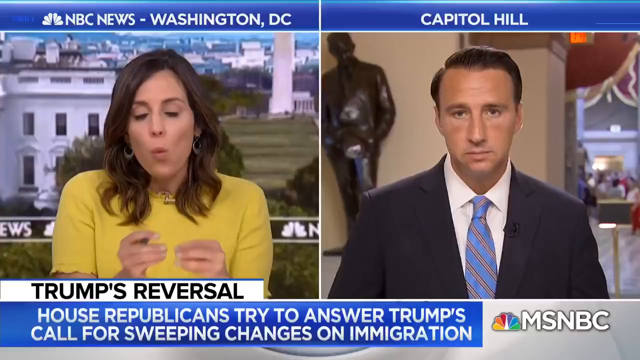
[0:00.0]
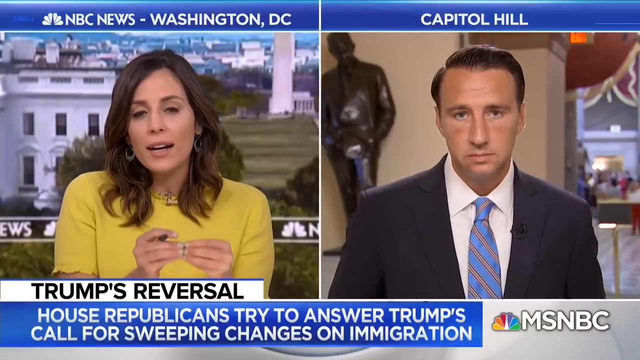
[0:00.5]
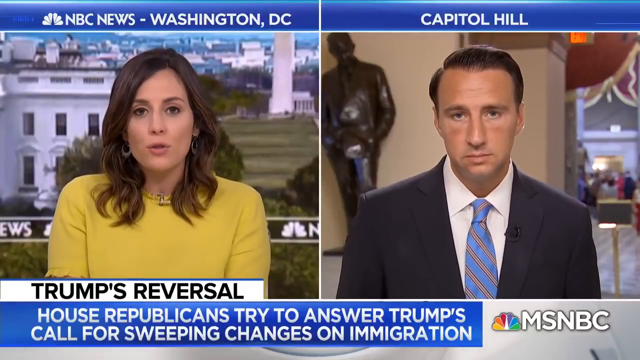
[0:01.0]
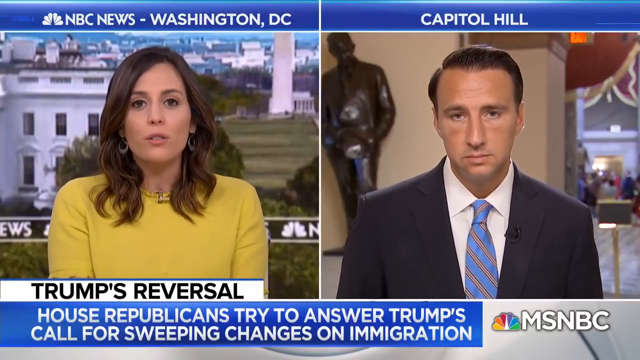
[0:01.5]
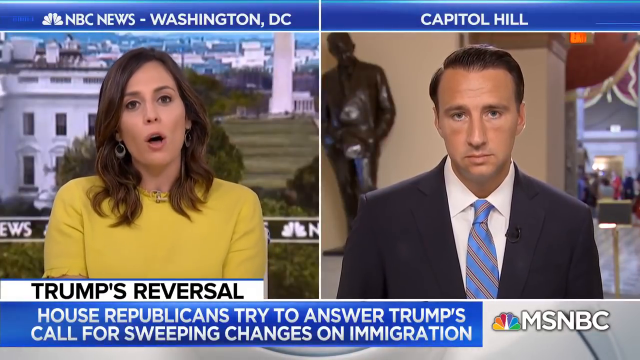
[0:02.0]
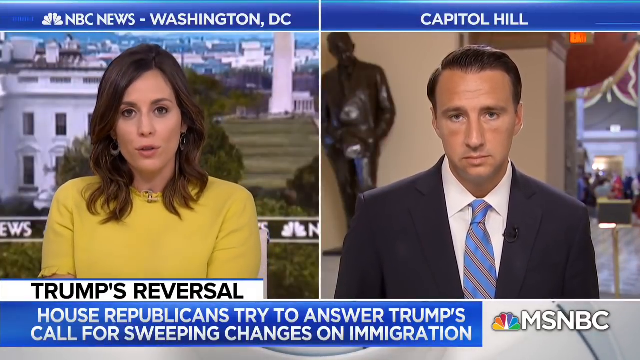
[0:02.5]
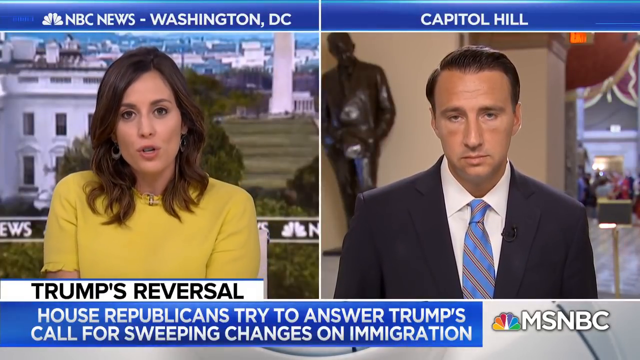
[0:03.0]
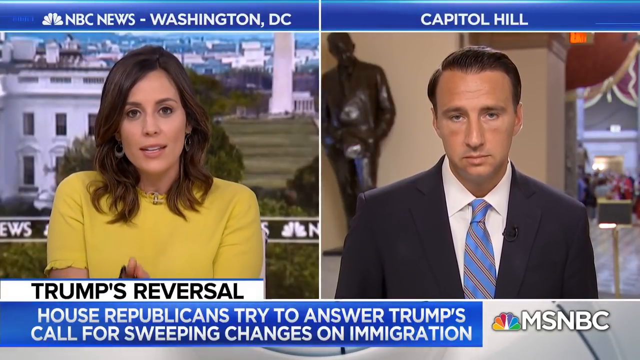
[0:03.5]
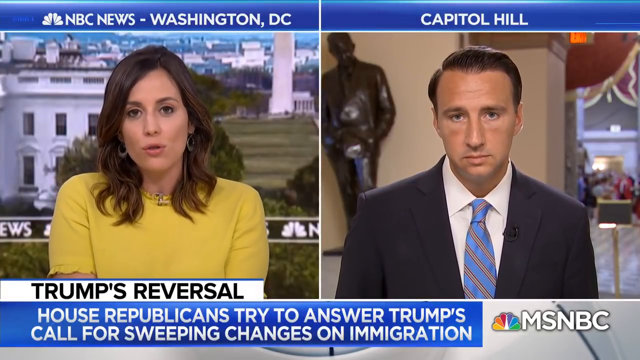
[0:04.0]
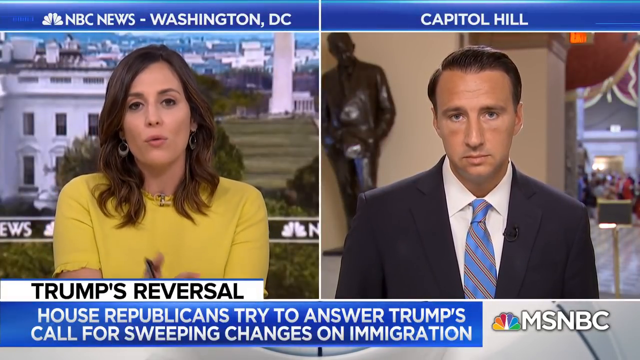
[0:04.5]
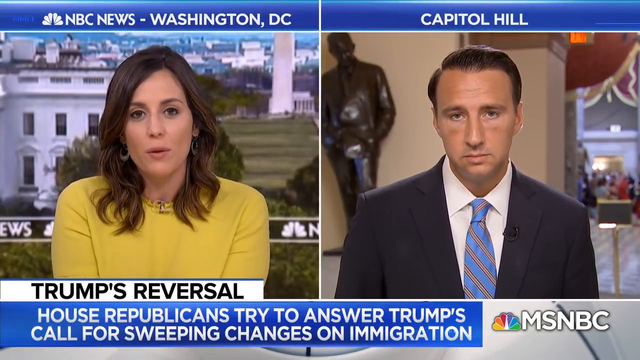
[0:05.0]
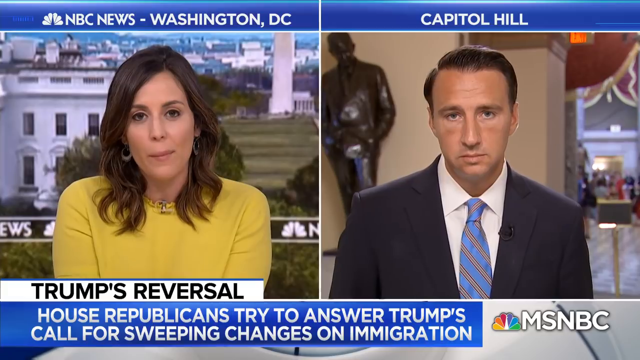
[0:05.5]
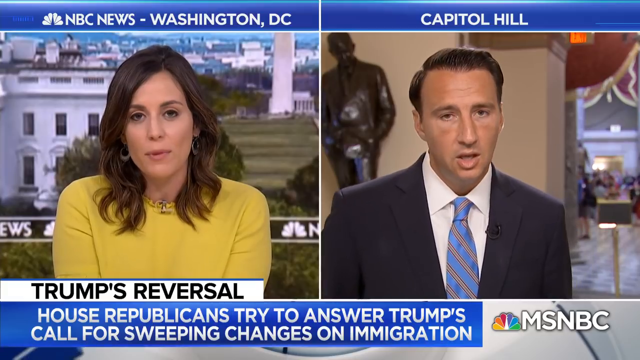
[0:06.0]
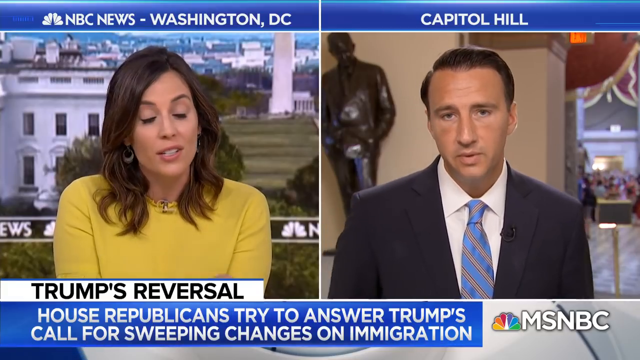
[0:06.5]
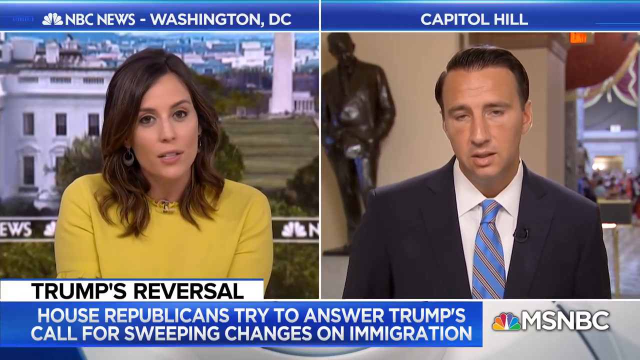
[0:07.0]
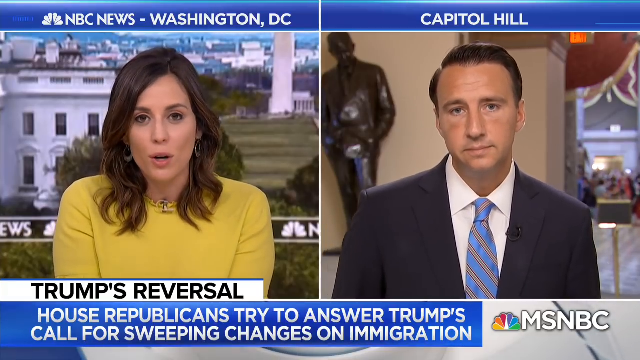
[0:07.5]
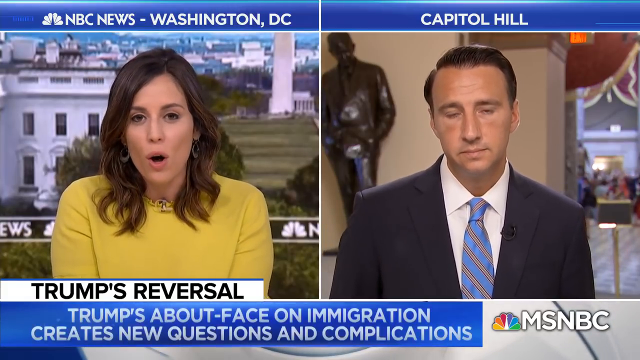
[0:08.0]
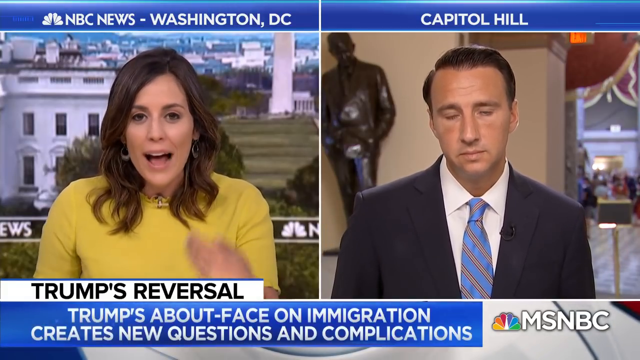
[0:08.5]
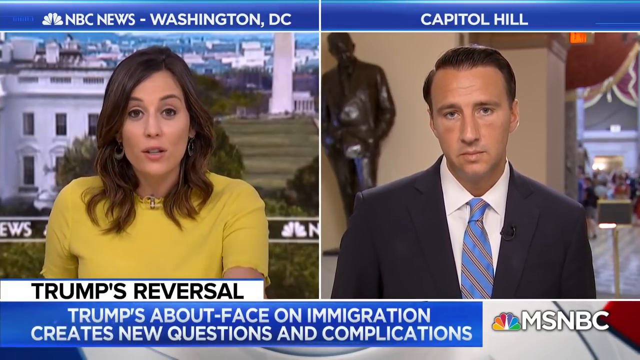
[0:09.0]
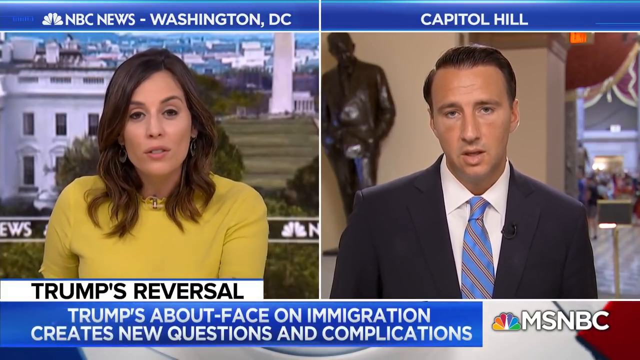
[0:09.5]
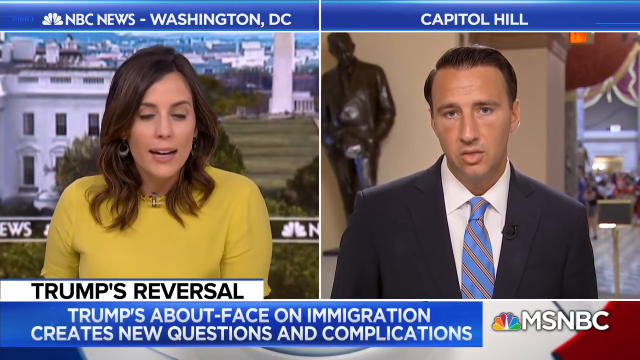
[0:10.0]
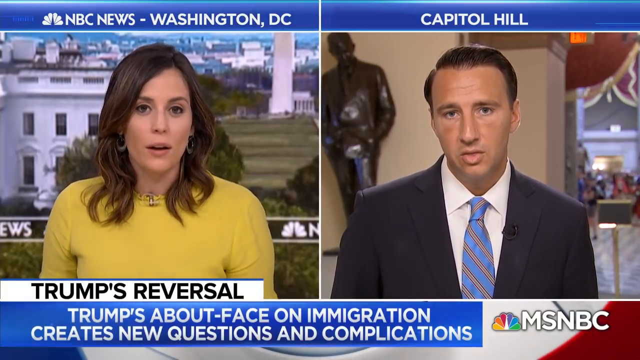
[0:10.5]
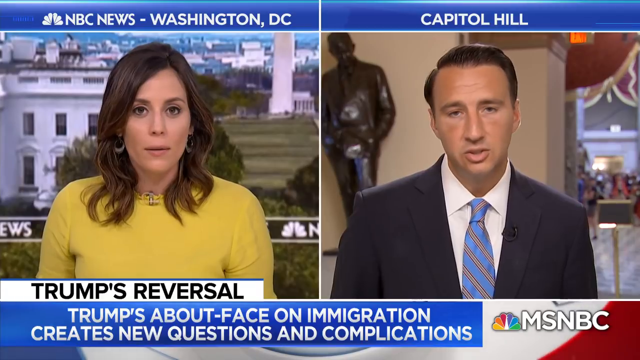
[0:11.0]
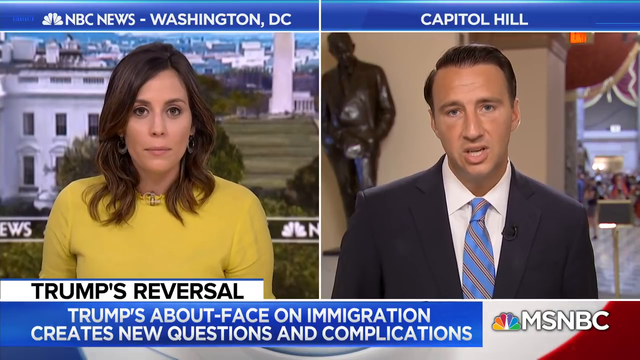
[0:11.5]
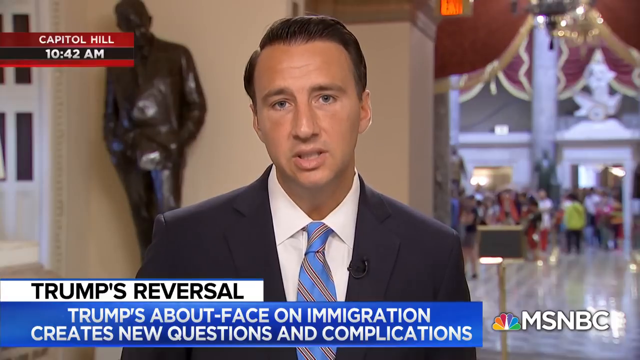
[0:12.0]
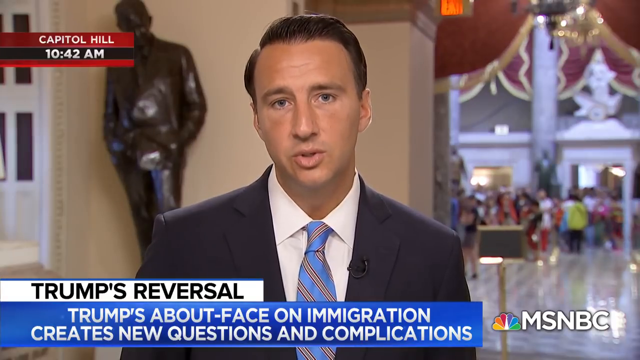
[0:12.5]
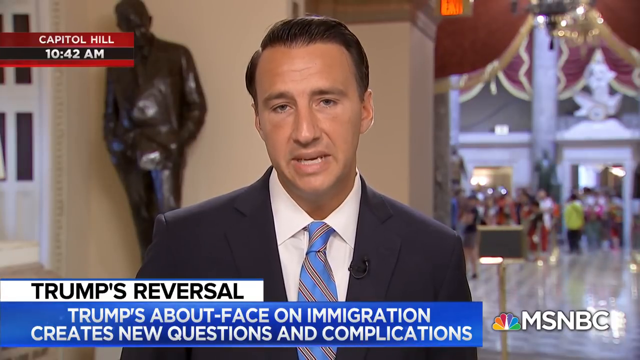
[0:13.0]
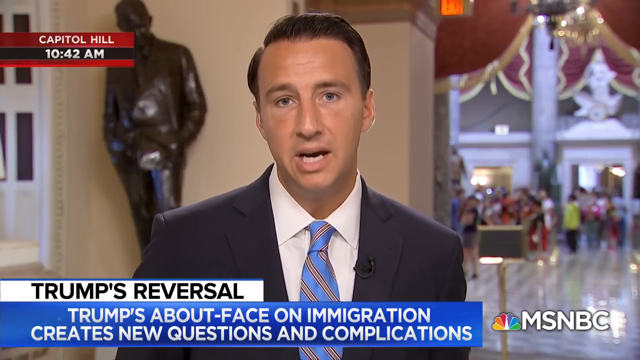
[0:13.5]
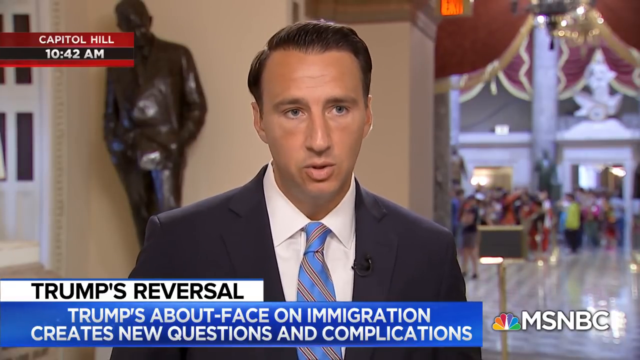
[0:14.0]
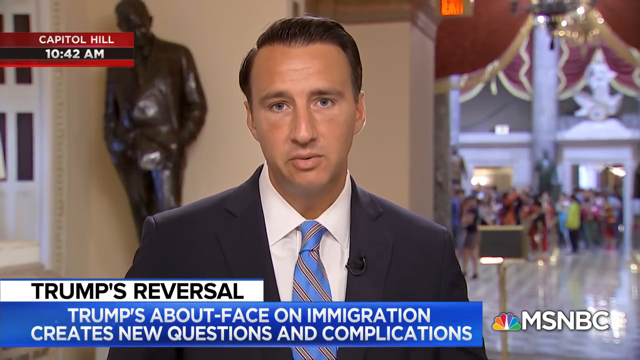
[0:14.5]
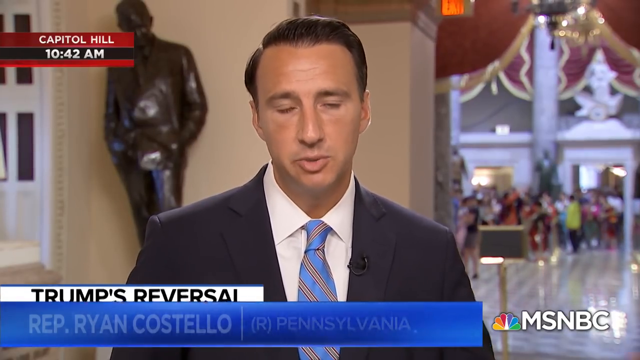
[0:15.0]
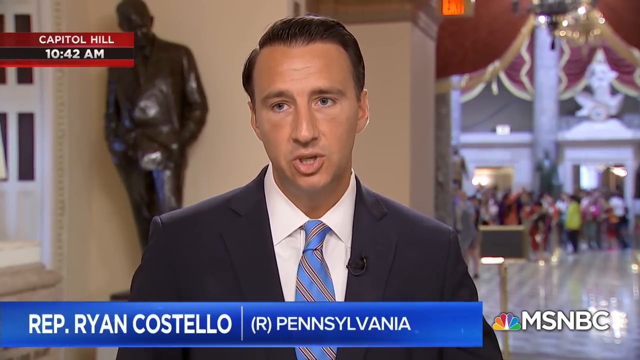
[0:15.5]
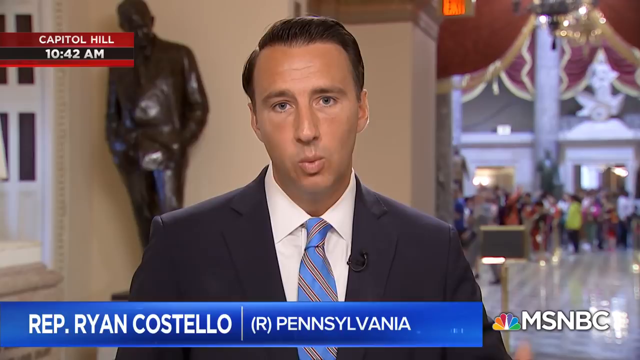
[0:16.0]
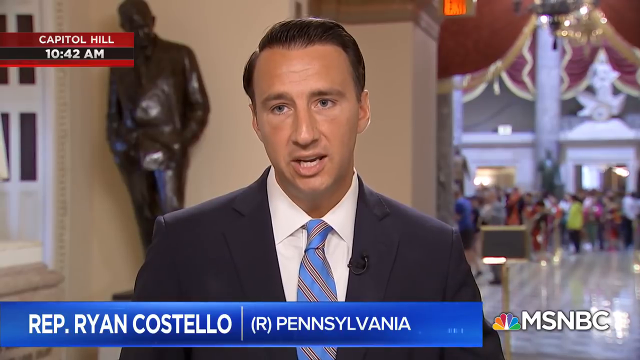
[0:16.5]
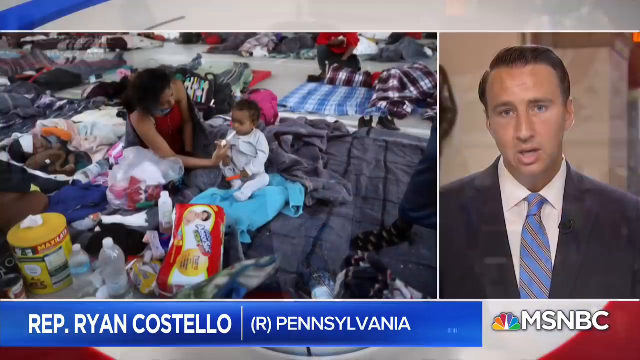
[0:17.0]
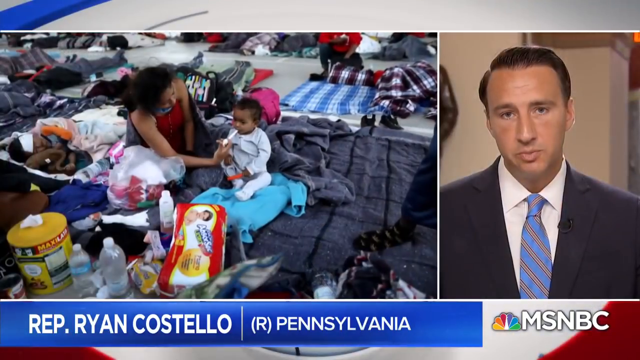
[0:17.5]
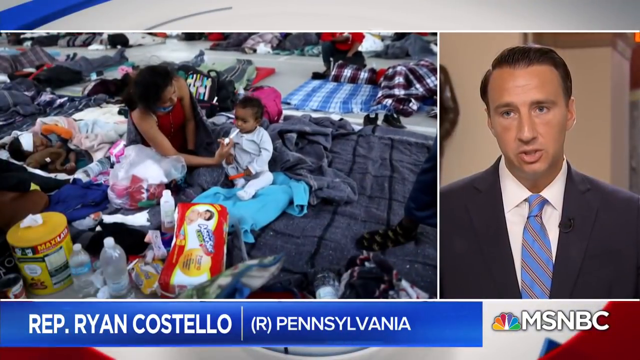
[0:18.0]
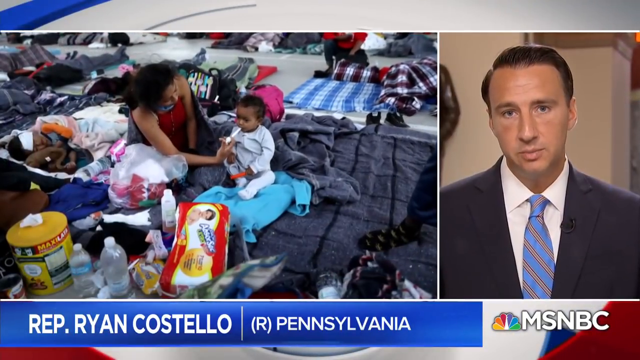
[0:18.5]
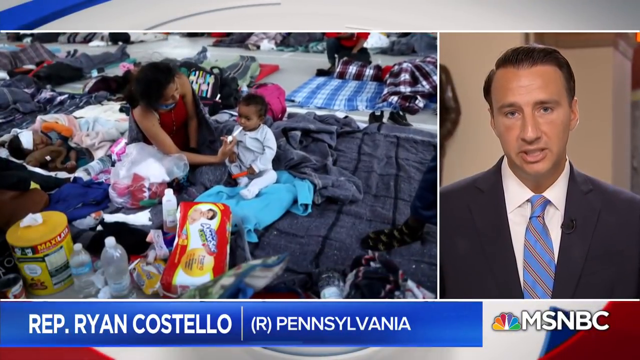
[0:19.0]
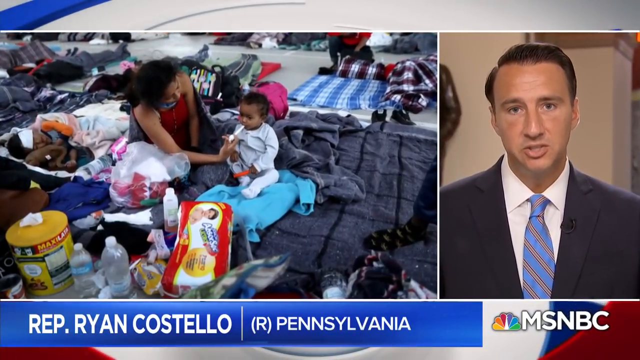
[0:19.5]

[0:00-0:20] The video opens on a split screen from what looks like an MSNBC news program. On the left is the host, Hallie Jackson, a Caucasian woman with brown hair, wearing some type of yellow short-sleeved top, a necklace and a hoop earring. The green screen behind her shows a shot of Washington DC. She gestures with both hands together as she talks to the person on the right-hand side of the screen, who appears to be a congressman. A blue bar across the top with white lettering reads "NBC News Washington DC" alongside a version of the NBC peacock-feather logo, and on the right-hand side it says "Capitol Hill", where the congressperson is. Scrolling across the bottom, the crawl reads "Trump's reversal" and "House Republicans tried to answer Trump's call for sweeping changes on immigration", and a more colorful MSNBC logo is in the lower right corner. Hallie keeps gesturing, making pointed movements with her hands together, and moves her right hand forward in a circular motion. The congressperson is a white male with brown hair, cut short on his right side and combed to the side on top. He wears a dark-colored jacket, a white shirt and a light blue tie with a diagonal red and white, almost candy-cane stripe; the tie looks like it needs ironing, and his left shoulder looks a little lower than his right. Behind him is one of the figures in the congressional hall, and further in the background are people who look like a tour group. He is Representative Ryan Costello, a Republican from Pennsylvania. As he talks, the even 50-50 split changes: Hallie Jackson is replaced on the left by an image taking up about two-thirds of the screen, showing a young mother feeding her child, with what looks like another child behind her. Other people lie behind them on pallets, with lots of blankets on the floor of the facility, and there appear to be baby wipes and bottles of water. On the right of the image, someone's leg in a black and white sock is visible. The imagery is probably from immigrant detention facilities. The congressperson talks and looks from side to side, and he has a mic on his left lapel.